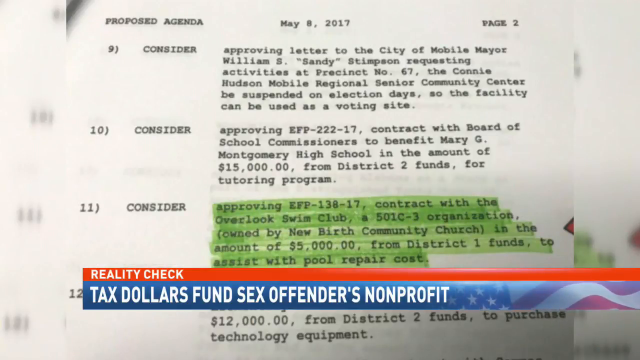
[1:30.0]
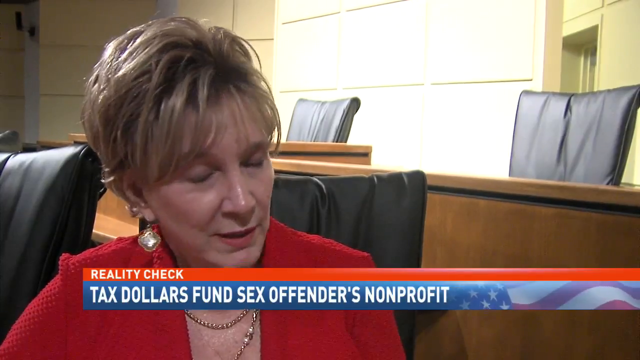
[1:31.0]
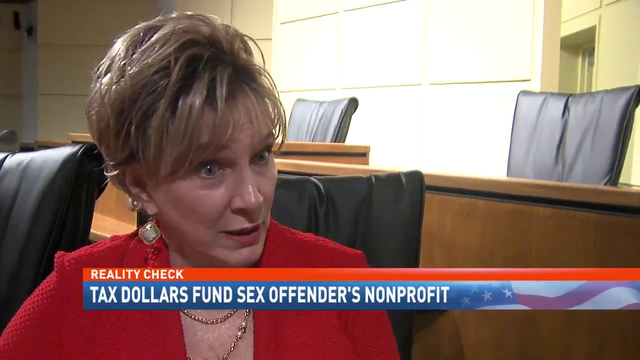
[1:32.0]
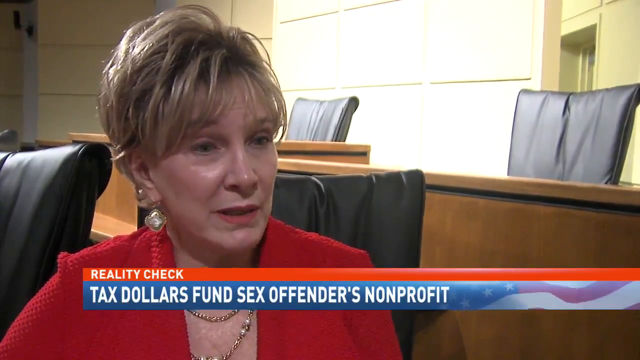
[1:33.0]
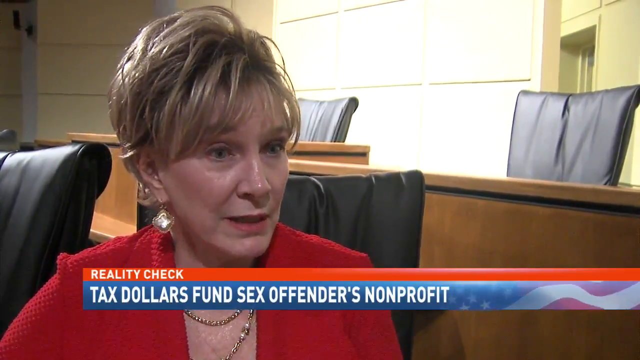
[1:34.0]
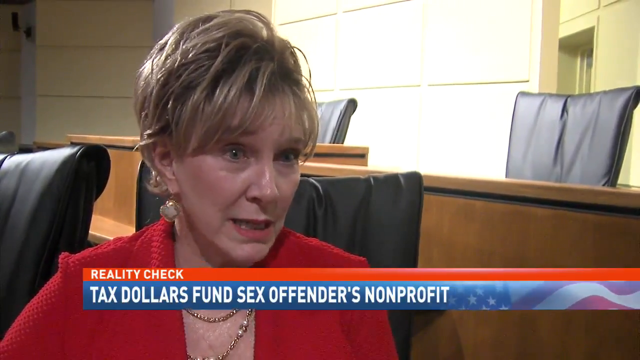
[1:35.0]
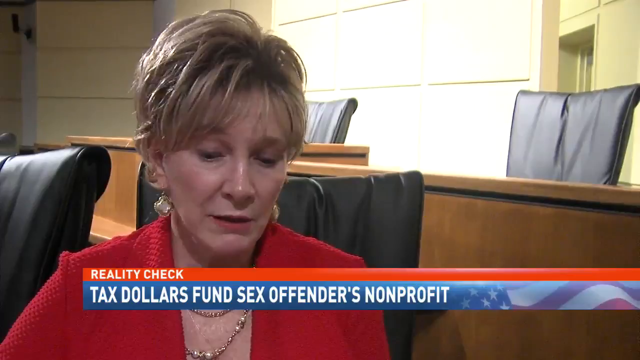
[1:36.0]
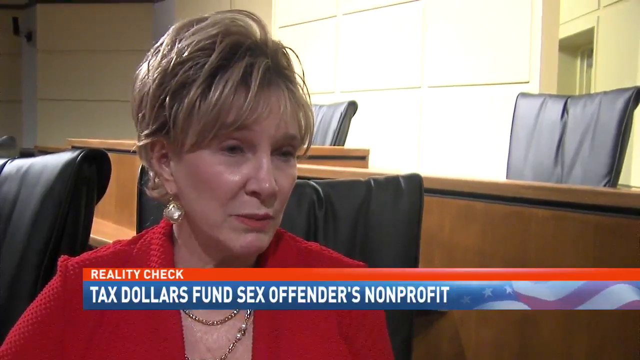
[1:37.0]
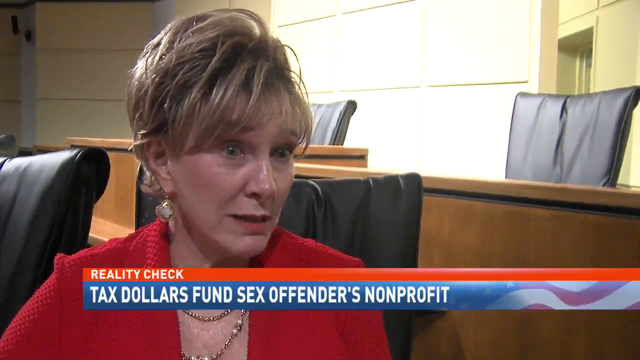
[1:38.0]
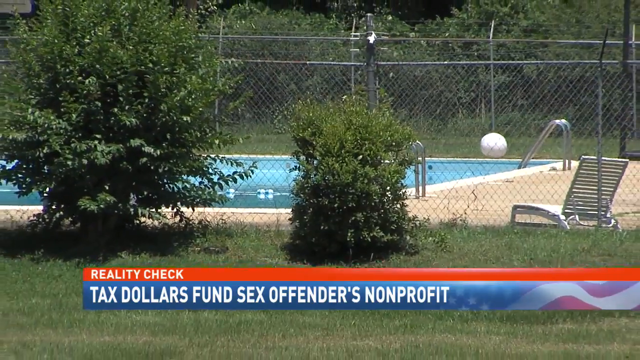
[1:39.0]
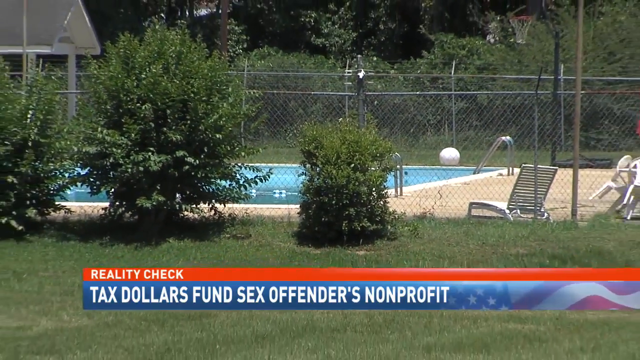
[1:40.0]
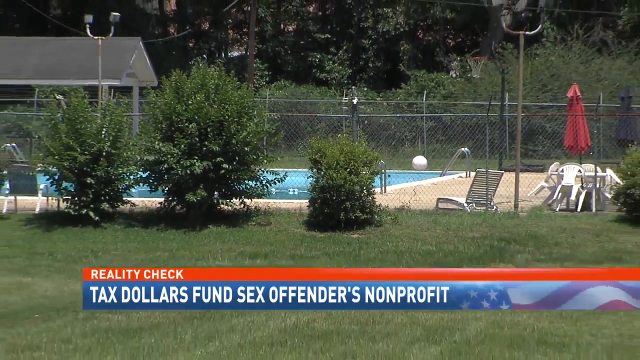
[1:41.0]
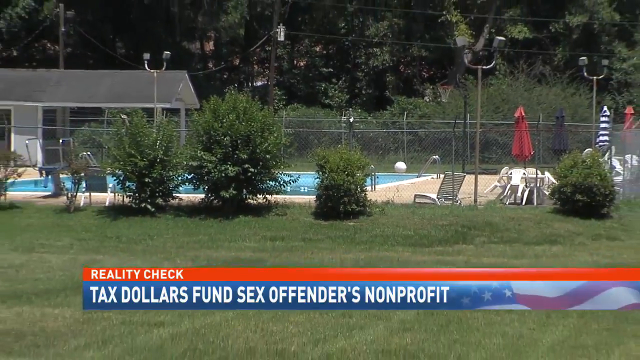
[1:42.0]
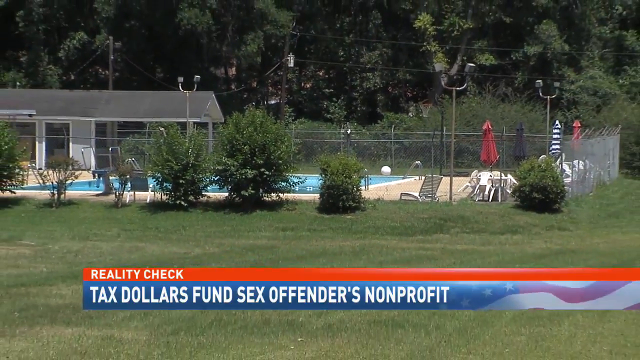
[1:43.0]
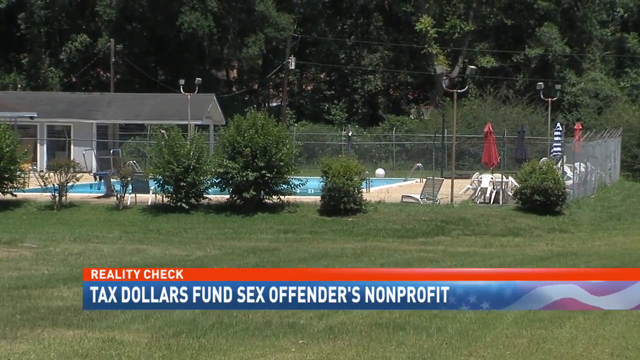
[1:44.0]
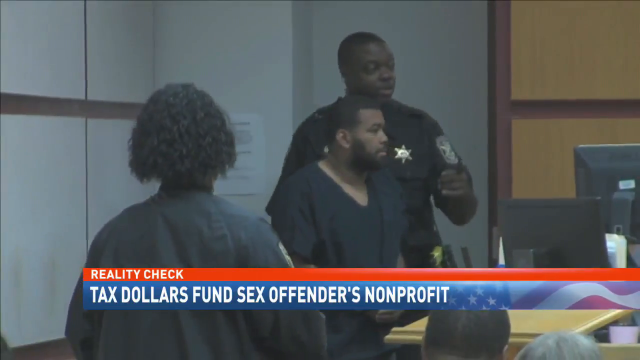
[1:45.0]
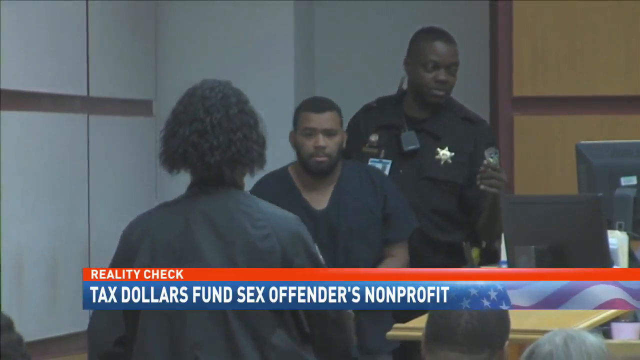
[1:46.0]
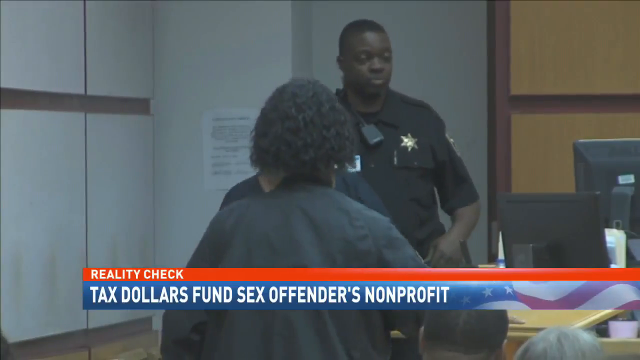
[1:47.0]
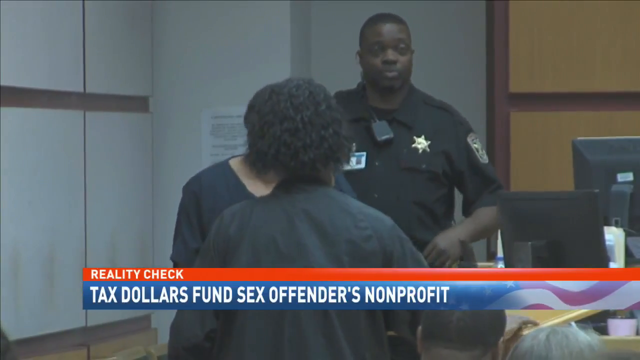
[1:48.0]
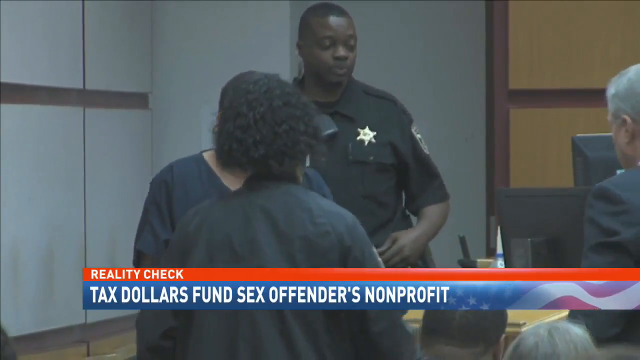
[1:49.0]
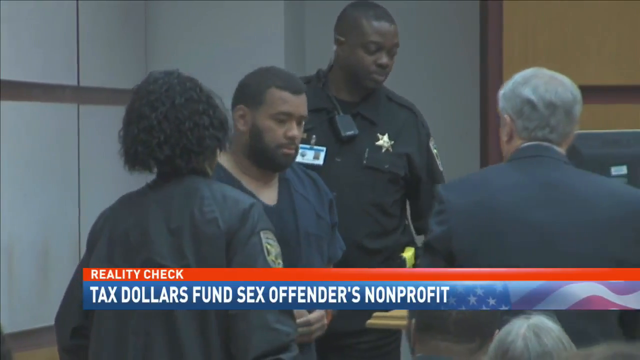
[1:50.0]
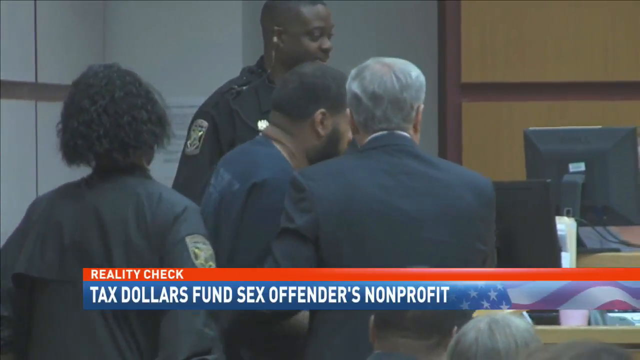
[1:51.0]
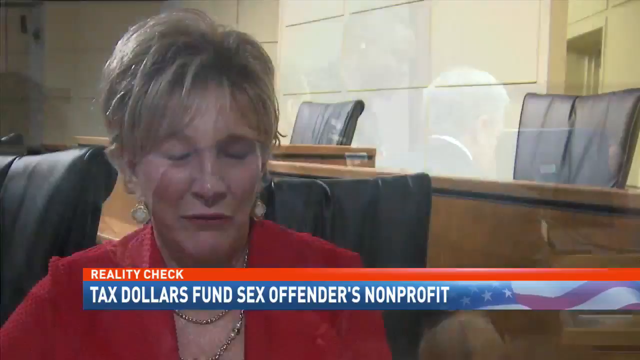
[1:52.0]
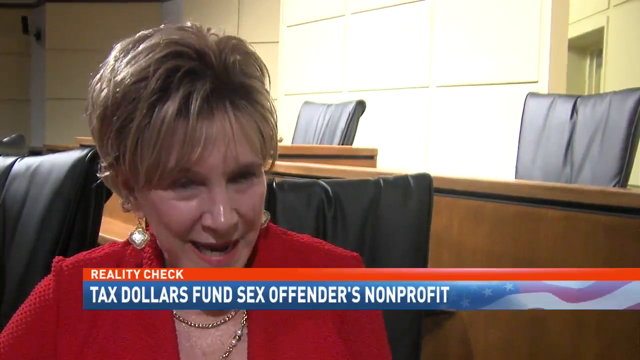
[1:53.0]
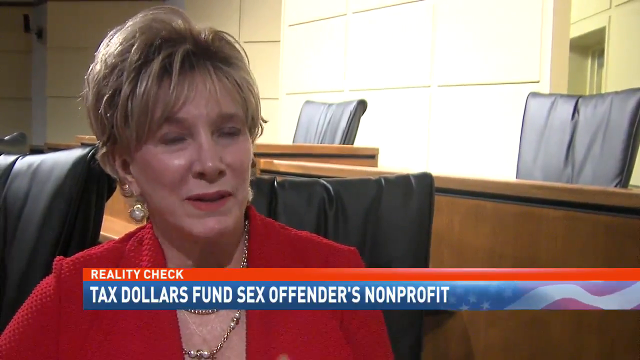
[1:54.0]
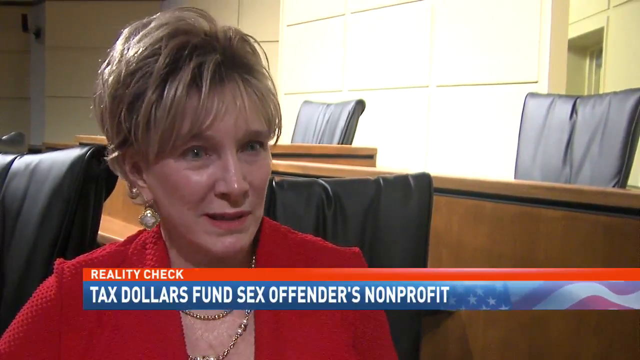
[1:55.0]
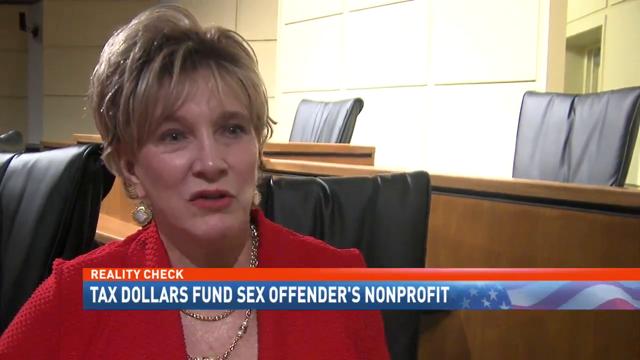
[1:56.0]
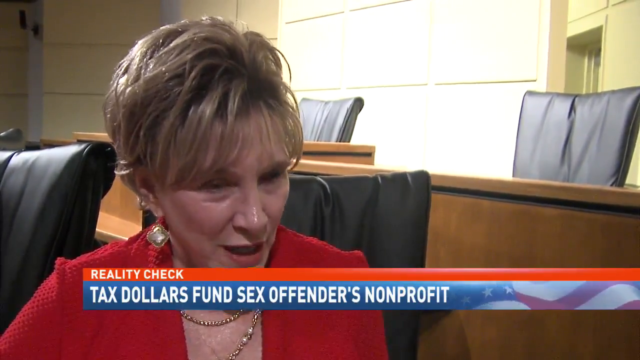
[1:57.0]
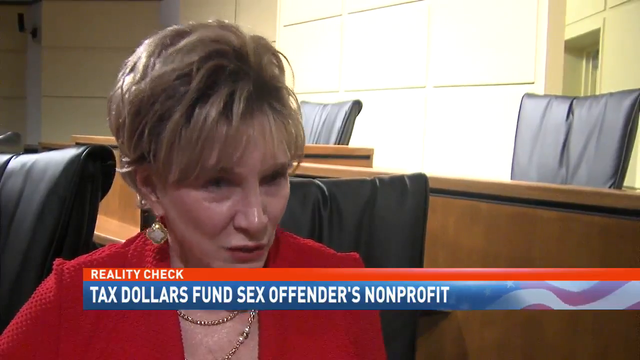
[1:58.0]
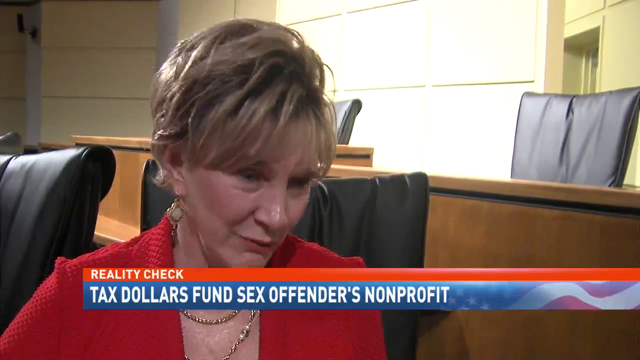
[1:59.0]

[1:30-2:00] A piece of paper has green highlighting on the bottom paragraph. The top says "Proposed Agenda May 8, 2017, page 2." It lists "Article 9, Consider Approving Letter to the City of Mobile Mayor William S. Sandy Stimson requesting activities at Princeton No. 67, the Connie Hudson Mobile Regional Senior Community Center be suspended on election days so the facility can be used as a voting site," then "Article 10, Consider Approving EFP22217 Contract with Board of School Commissioners to Benefit Mary G. Montgomery High School in the amount of $15,000 from District 2 funds for tutoring program," and "Article 11, Consider Approving EFP138-17 Contract with the Overlook Swim Club, a 501C-3 organization owned by New Birth Community Church in the amount of $5,000 from District 1 funds to assist with pool repair costs." Underneath is still the reality check banner that says "Tax Dollars Fund Sex Offenders Non-Profit." The scene switches to the councilwoman with short blonde hair, a red business suit and a large earring, speaking to the camera in the courtroom. Then the scene switches to the pool, with a large white pool ball moving in the background and two bushes outside the pool fence. There is a pool chair on the right side, and the pool seems blue. The video pans out to show the entire pool. Then a man is shown being taken to court while a police officer escorts him, with a woman in a gray jumpsuit in front of him. The man is walked toward the woman, and then a lawyer with white hair approaches.